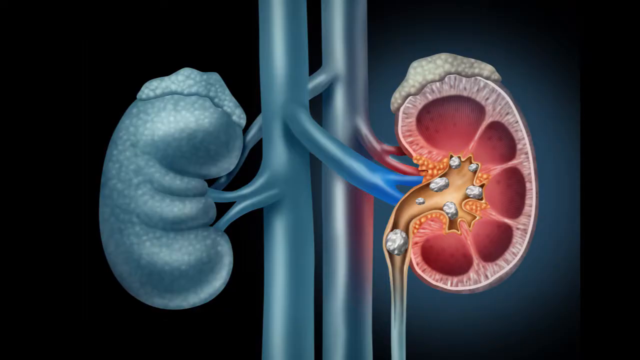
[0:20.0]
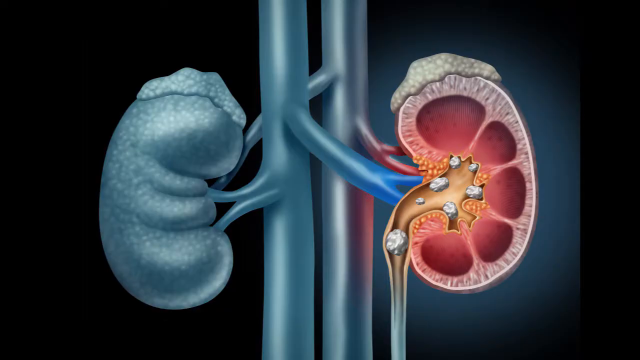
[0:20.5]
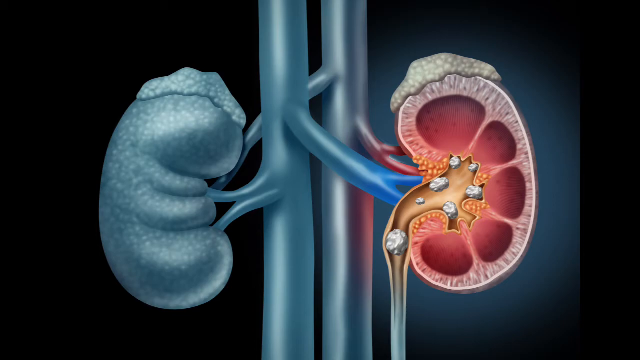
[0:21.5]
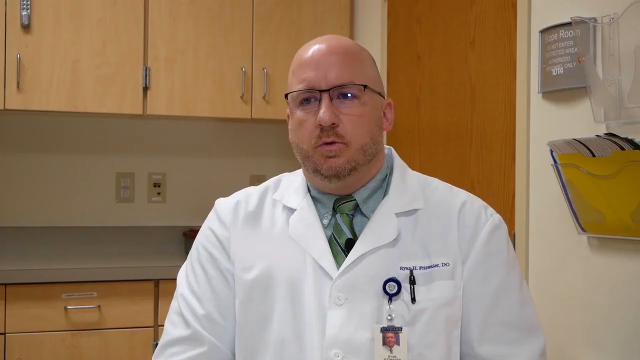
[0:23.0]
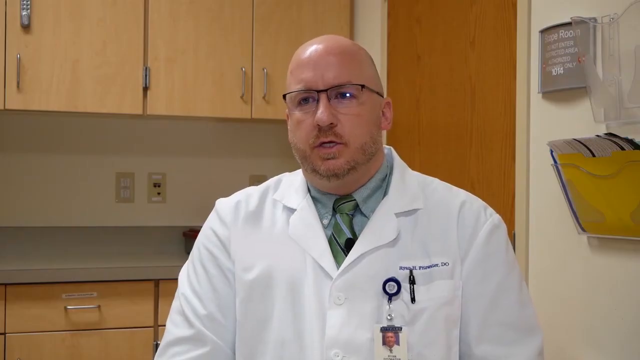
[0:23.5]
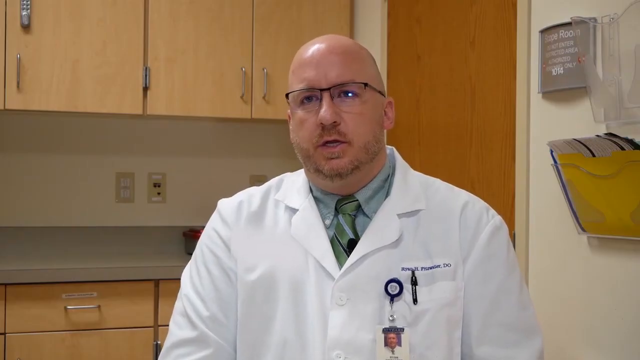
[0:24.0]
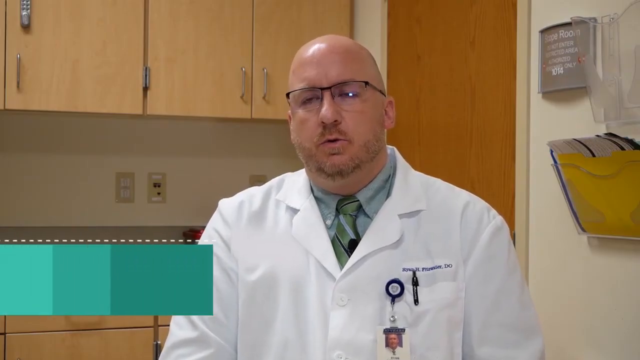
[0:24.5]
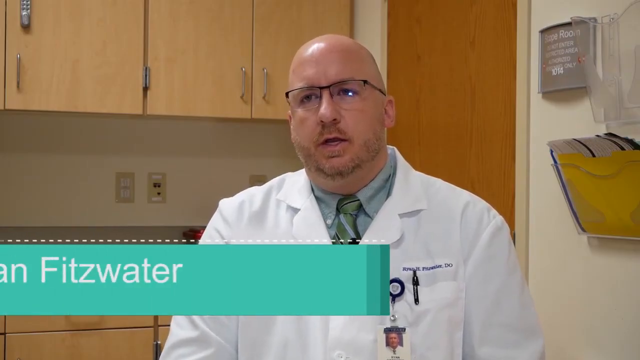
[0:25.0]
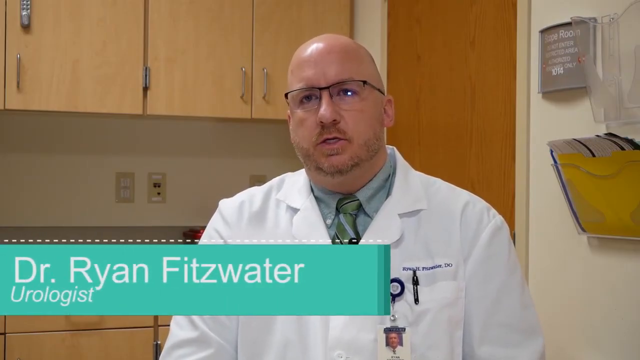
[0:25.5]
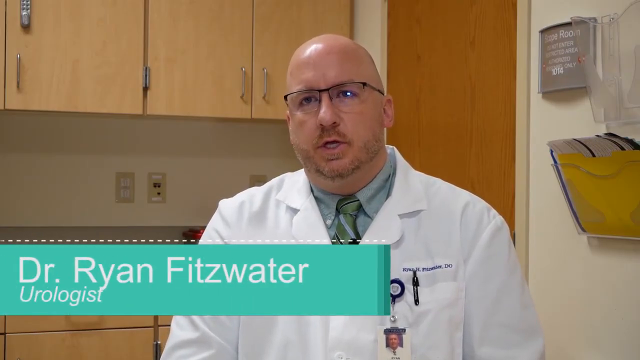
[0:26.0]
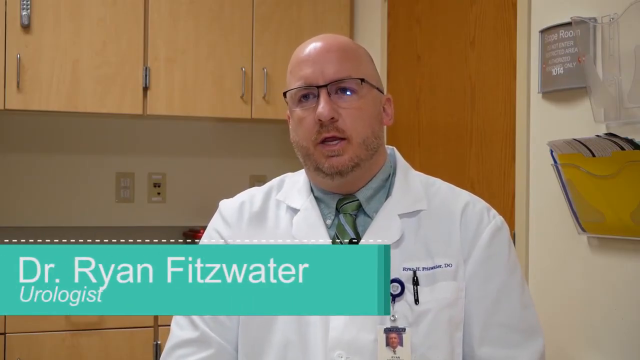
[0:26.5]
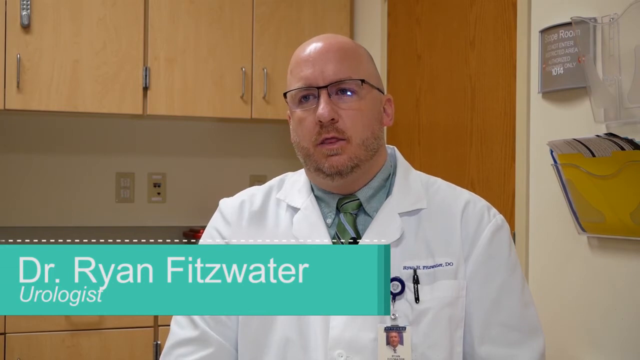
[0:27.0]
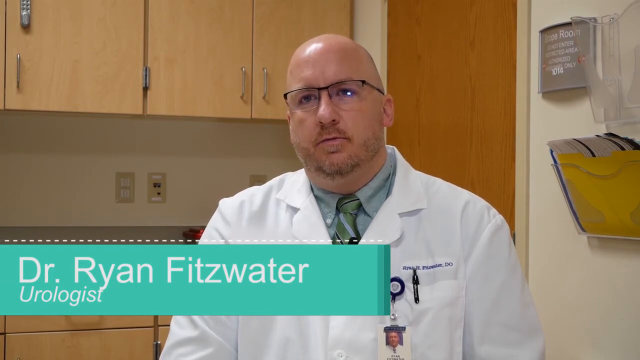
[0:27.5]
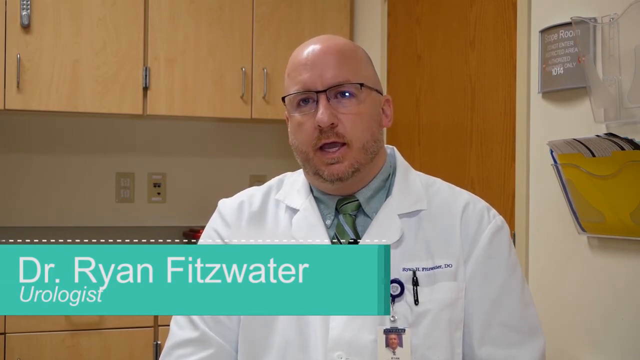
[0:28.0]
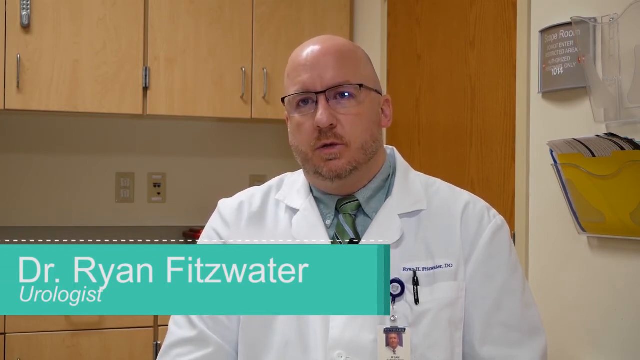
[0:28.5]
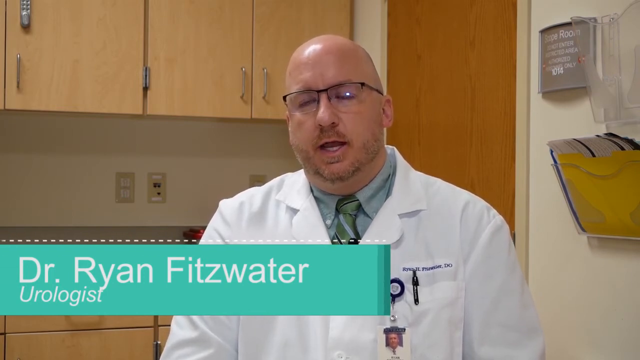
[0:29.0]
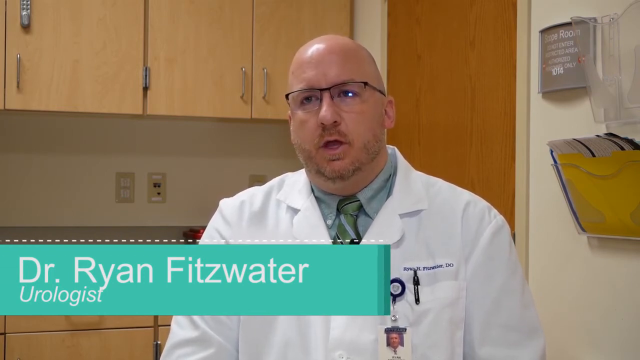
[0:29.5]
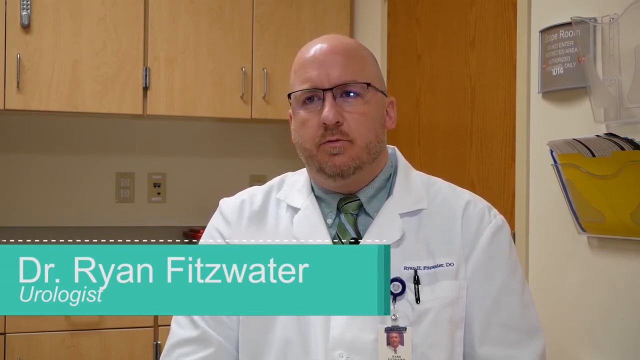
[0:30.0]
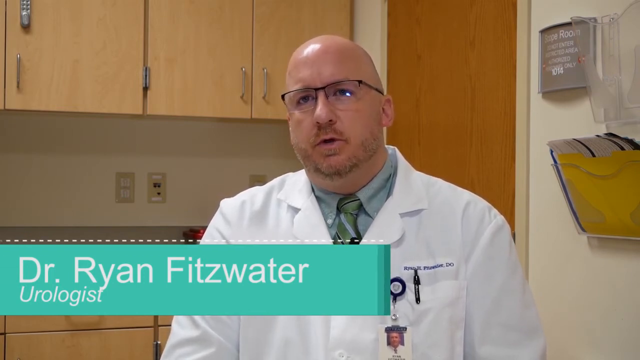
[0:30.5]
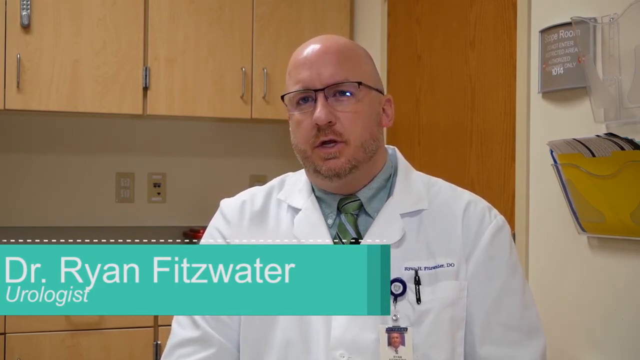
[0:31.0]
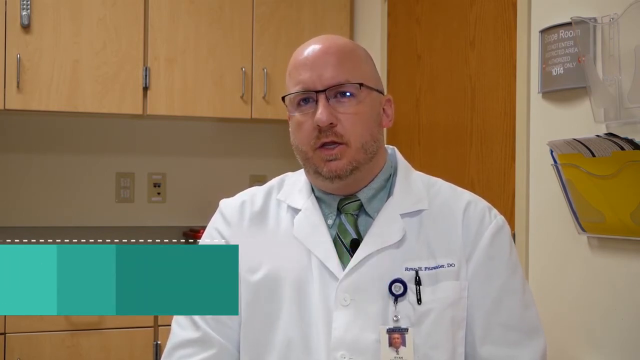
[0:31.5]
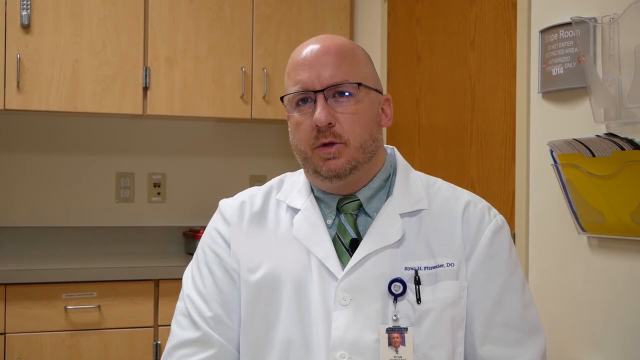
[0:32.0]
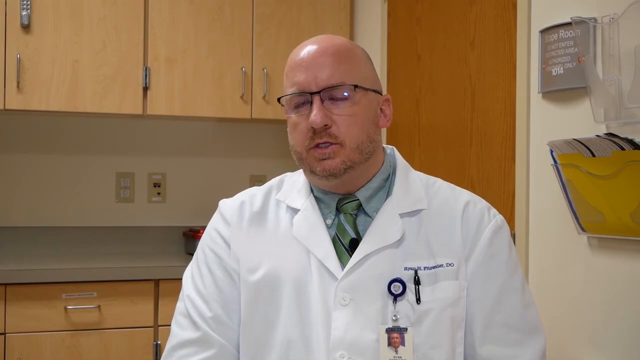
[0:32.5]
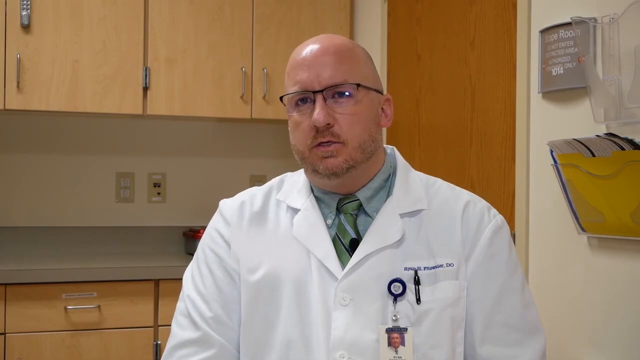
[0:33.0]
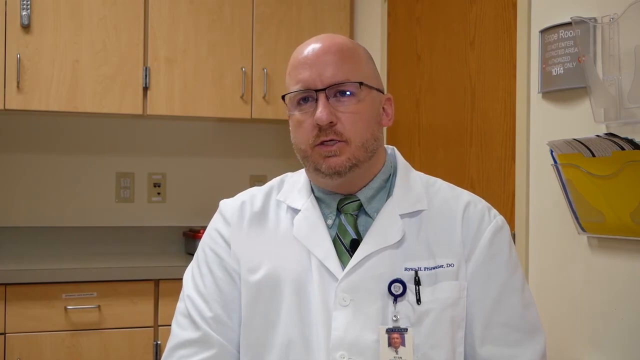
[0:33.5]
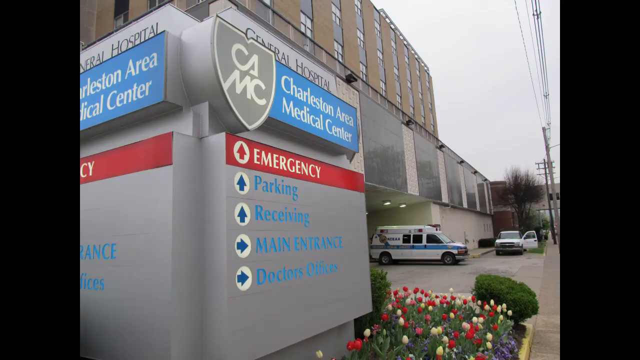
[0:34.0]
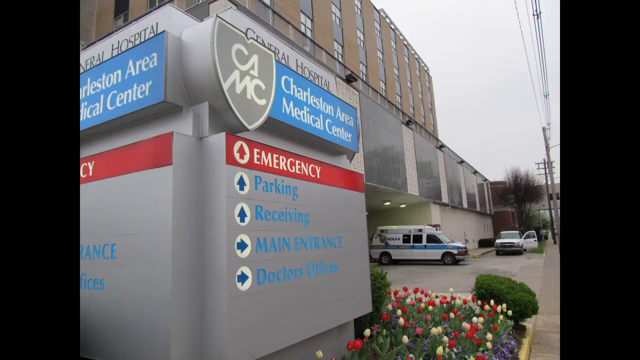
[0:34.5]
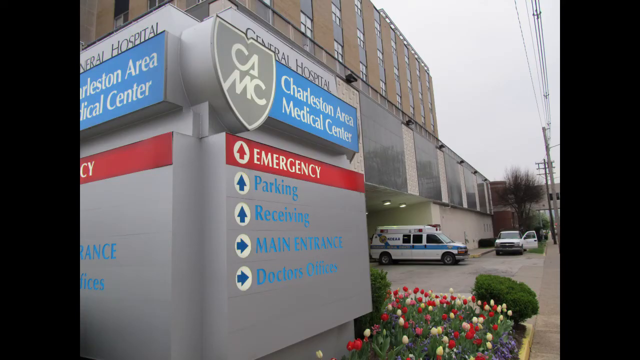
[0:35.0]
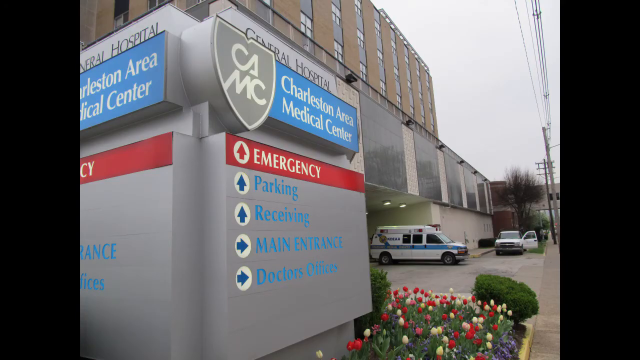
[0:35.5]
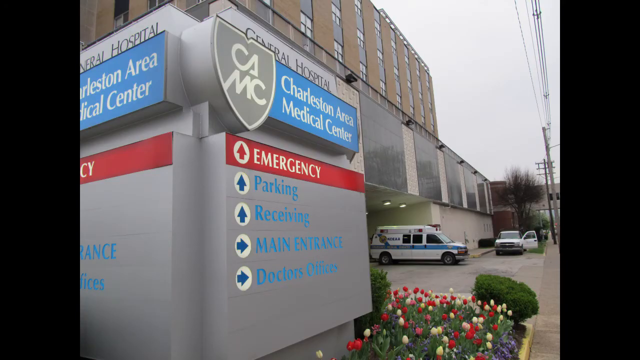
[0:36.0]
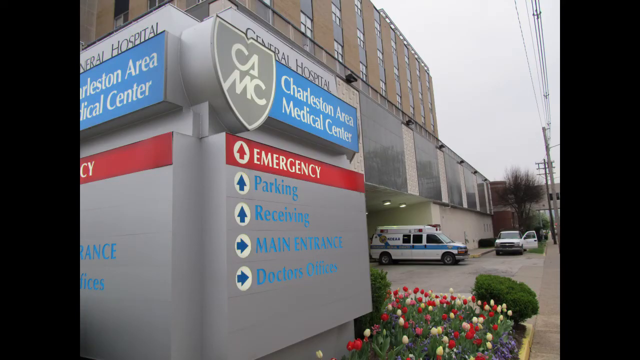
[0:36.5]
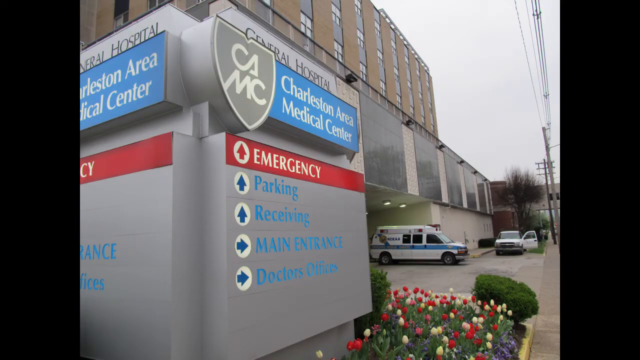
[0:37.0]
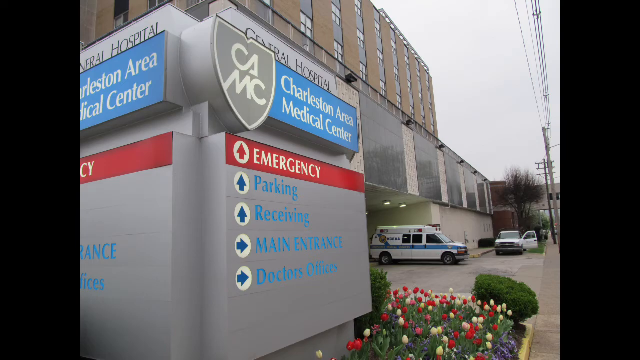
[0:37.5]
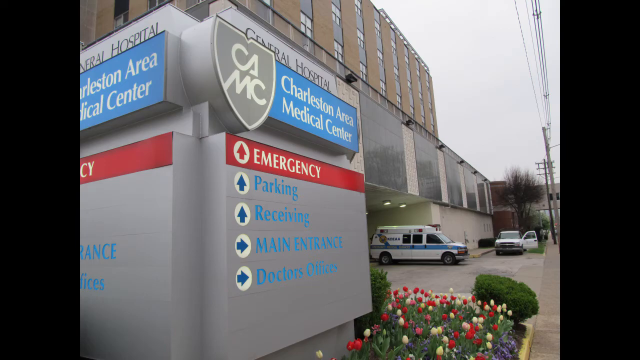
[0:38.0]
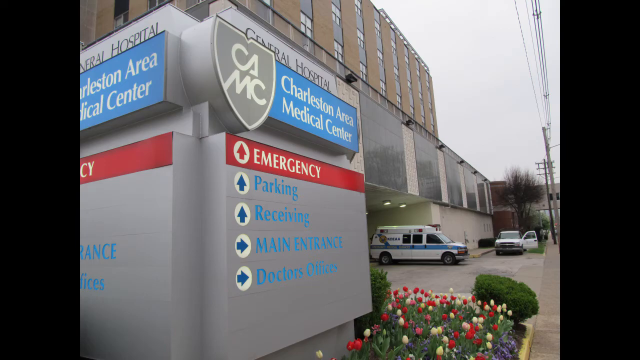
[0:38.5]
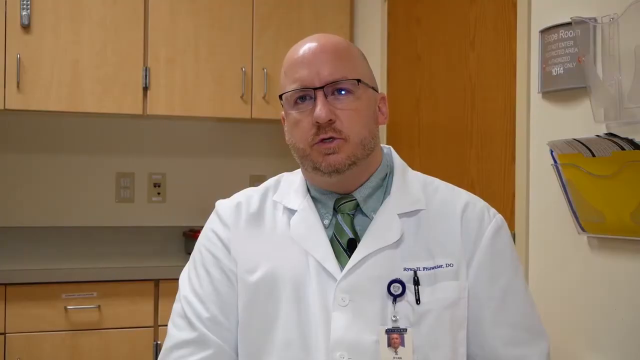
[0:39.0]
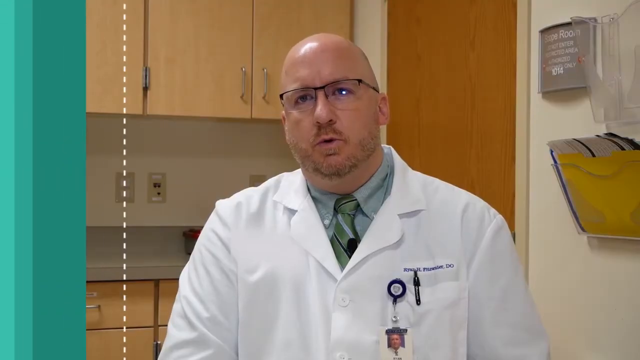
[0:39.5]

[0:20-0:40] The colorful kidney on the right side and the gray kidney on the left side are on screen. The scene changes to a doctor wearing a white lab coat. He is bald, with no hair on top of his head, and has a mustache, a short beard and eyeglasses. Text on the bottom left identifies him as Dr. Ryan Fitzwater, a urologist. He wears a light green striped tie with light blue and black stripes. He is sitting down in a doctor's office, speaking and looking to the left. The scene then shows the outside of a hospital, the Charleston Area Medical Center. To the left are an ambulance and a white truck with its driver's side door open, and to the left is a very large hospital sign with directions for the emergency room, parking and receiving. The scene changes again to the doctor talking in the doctor's office.